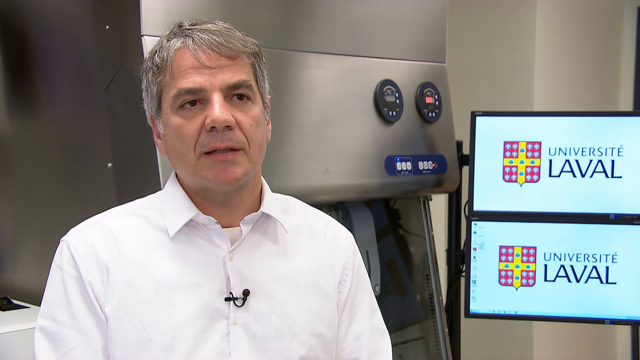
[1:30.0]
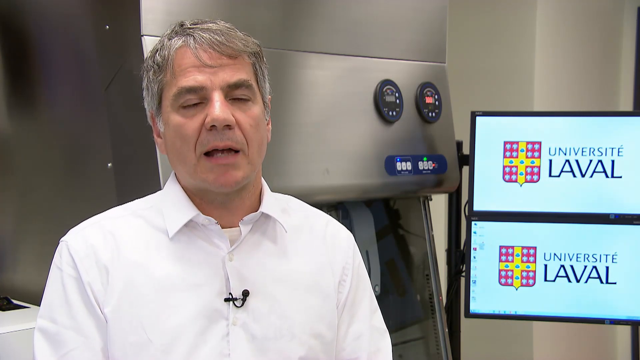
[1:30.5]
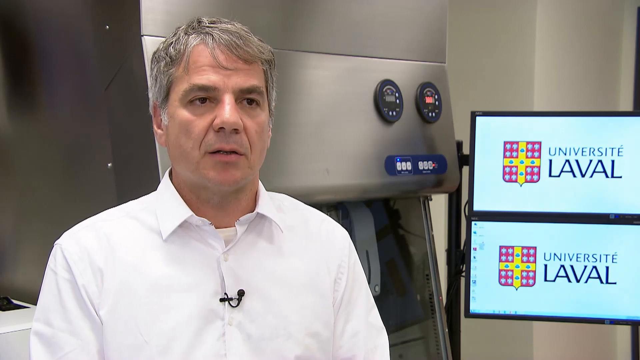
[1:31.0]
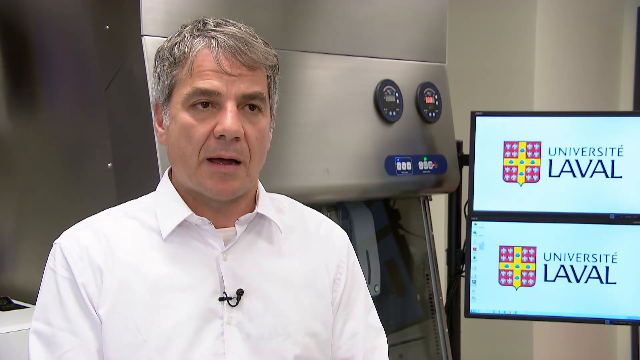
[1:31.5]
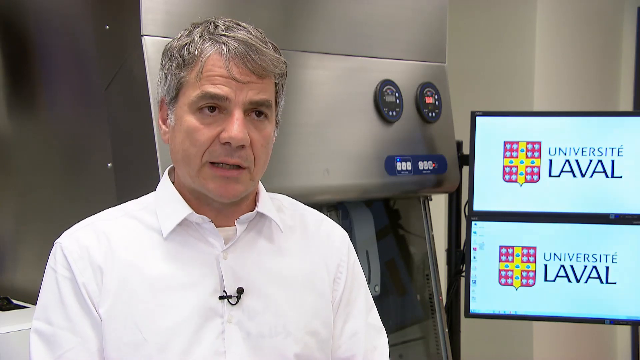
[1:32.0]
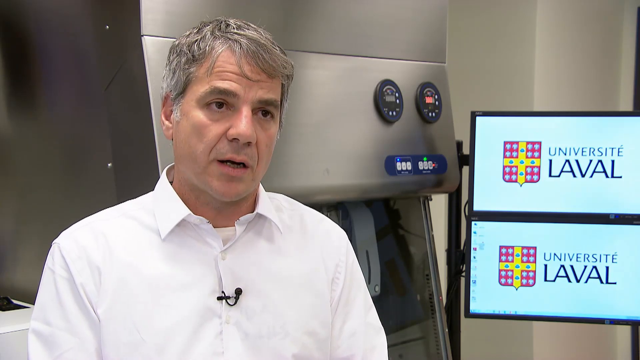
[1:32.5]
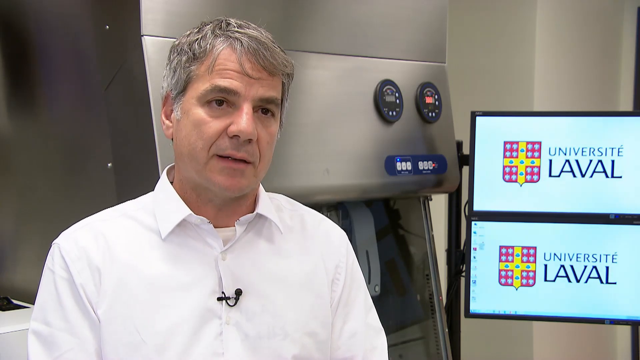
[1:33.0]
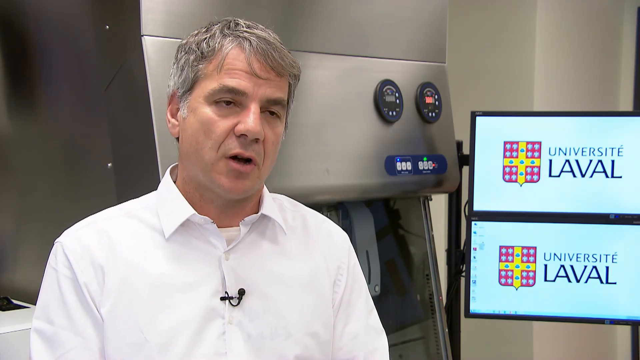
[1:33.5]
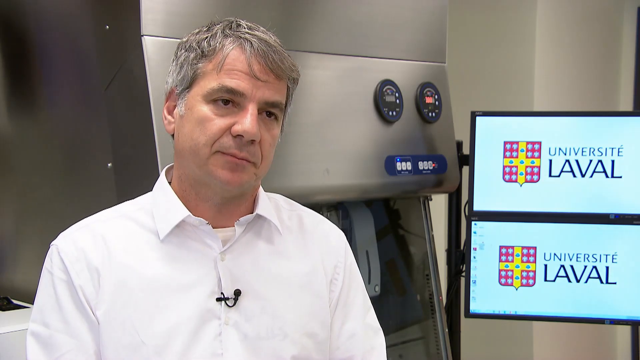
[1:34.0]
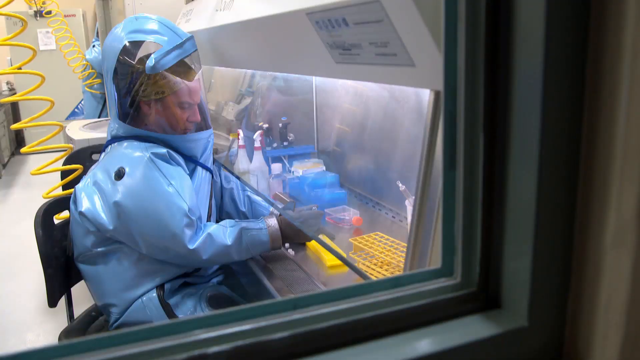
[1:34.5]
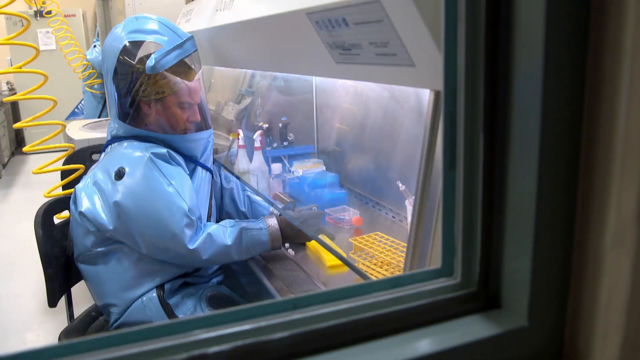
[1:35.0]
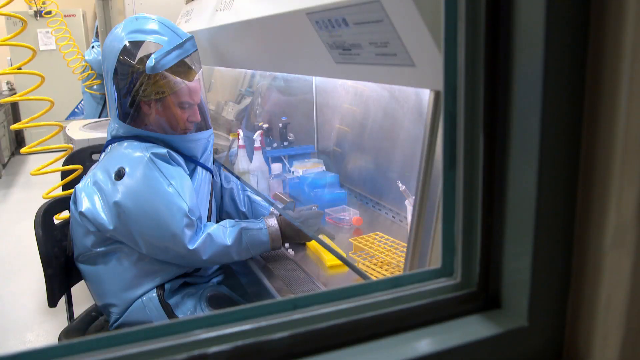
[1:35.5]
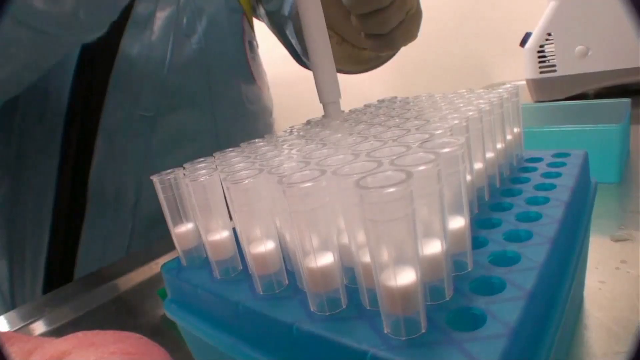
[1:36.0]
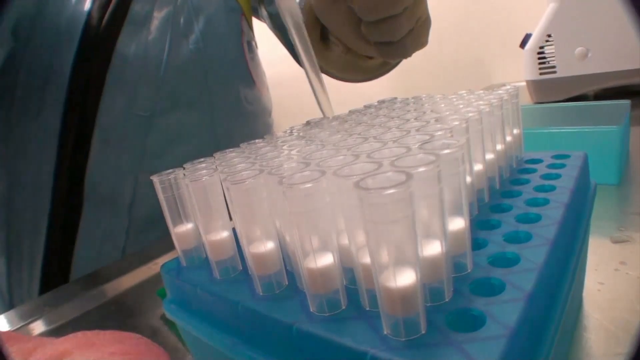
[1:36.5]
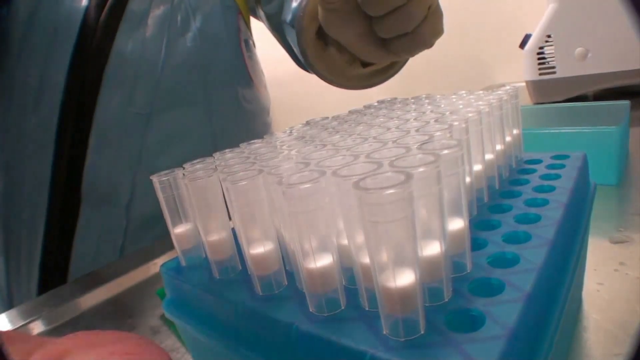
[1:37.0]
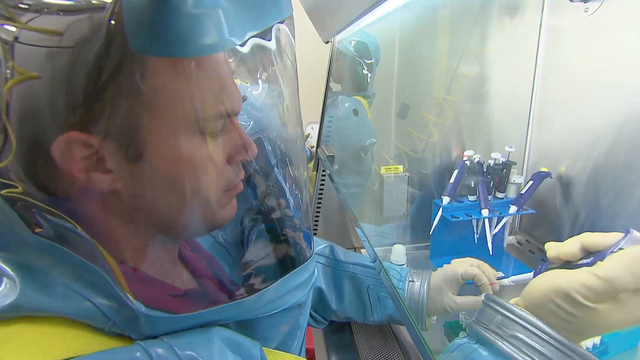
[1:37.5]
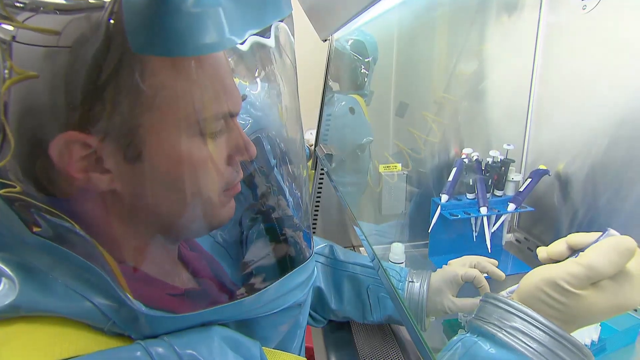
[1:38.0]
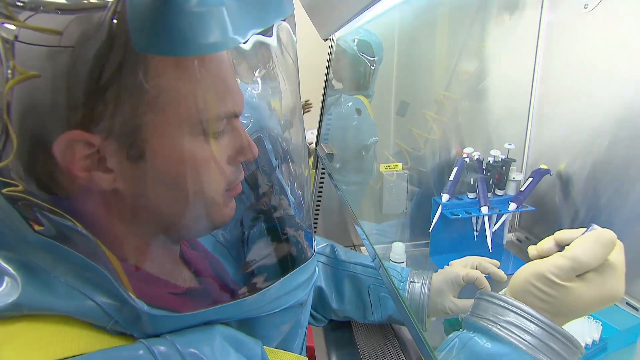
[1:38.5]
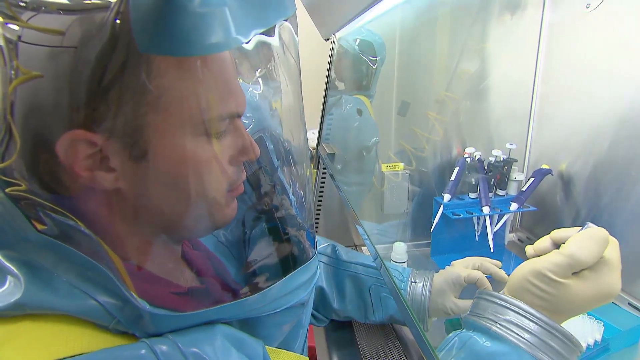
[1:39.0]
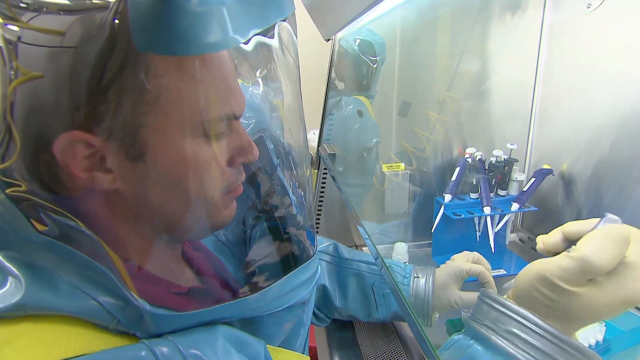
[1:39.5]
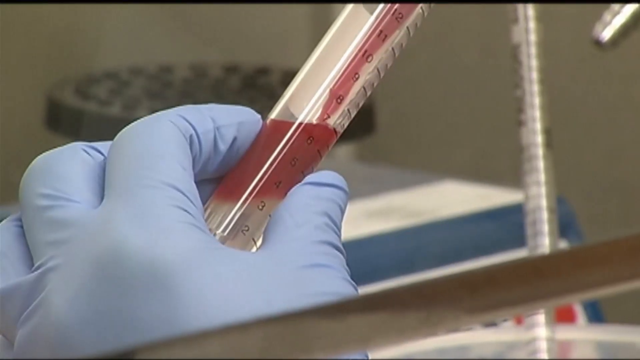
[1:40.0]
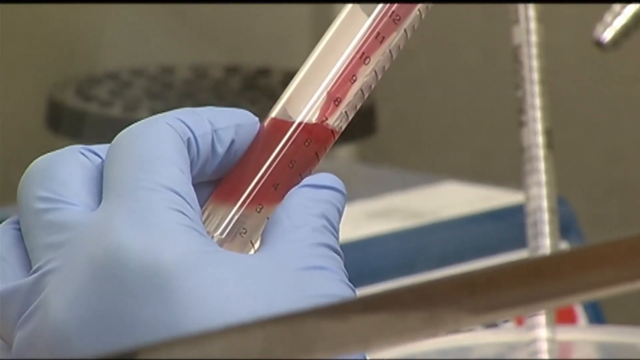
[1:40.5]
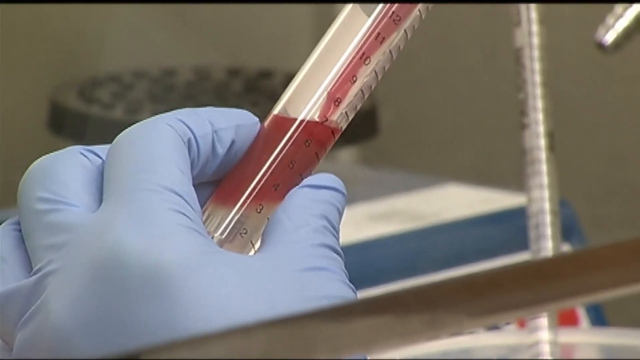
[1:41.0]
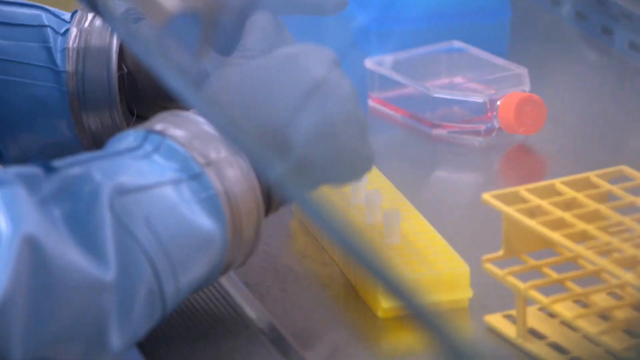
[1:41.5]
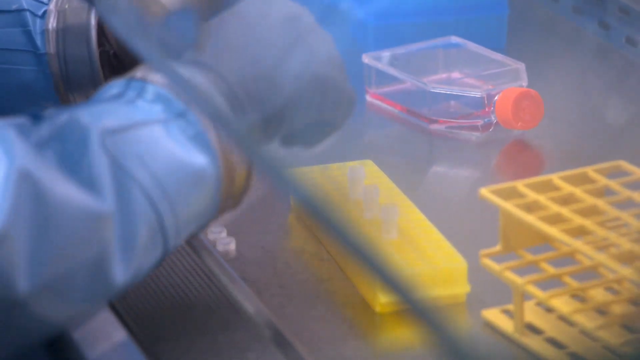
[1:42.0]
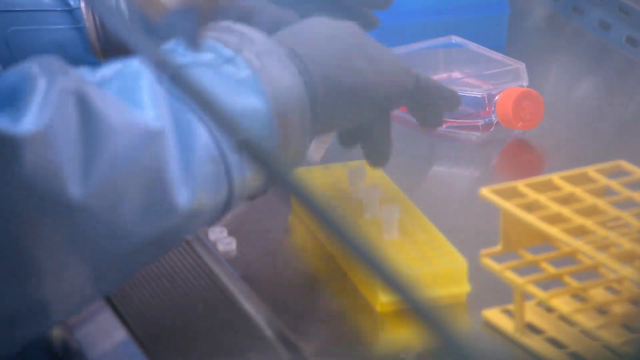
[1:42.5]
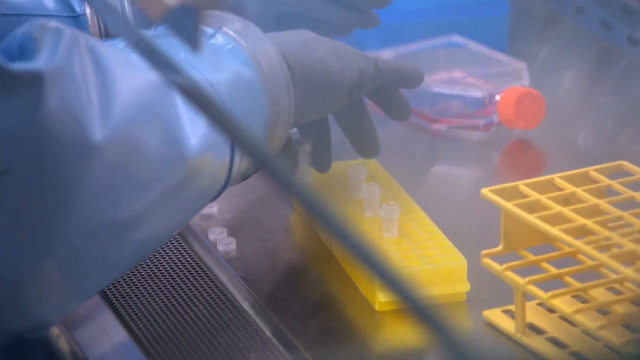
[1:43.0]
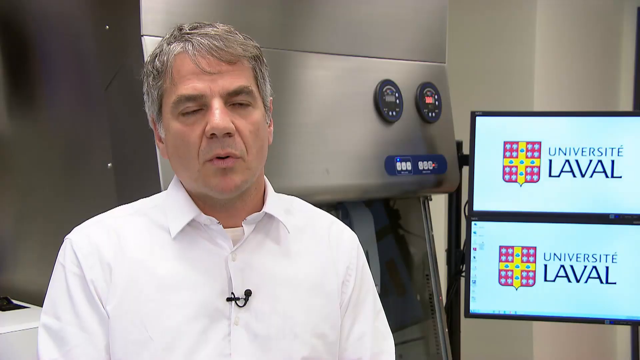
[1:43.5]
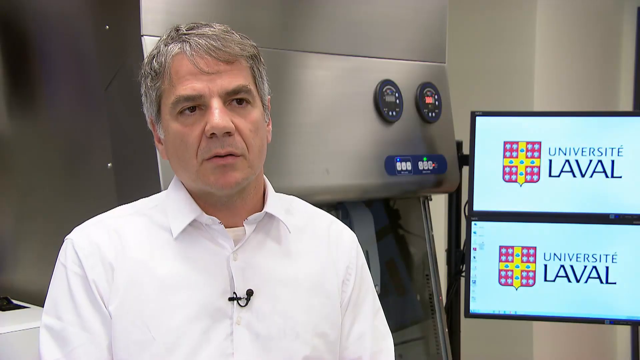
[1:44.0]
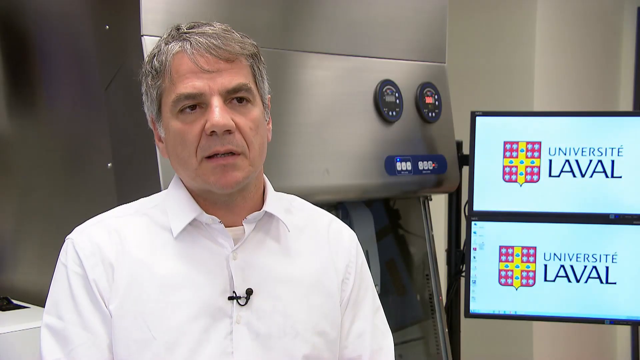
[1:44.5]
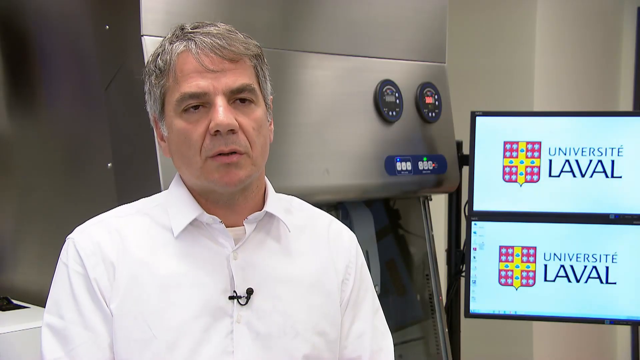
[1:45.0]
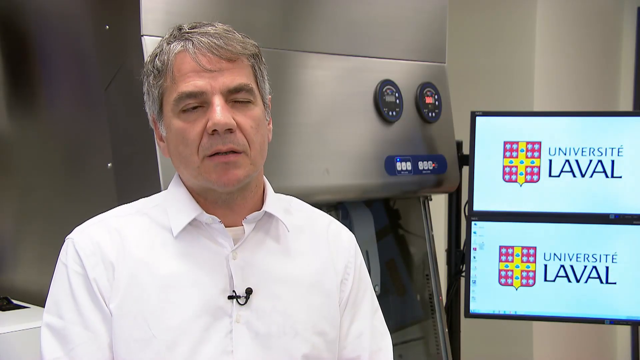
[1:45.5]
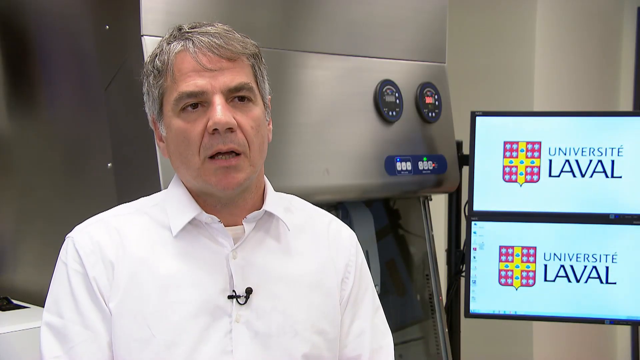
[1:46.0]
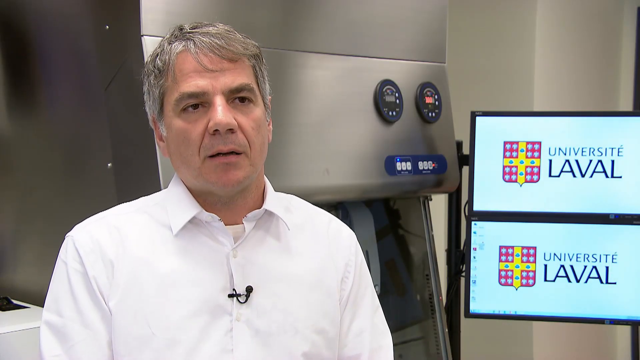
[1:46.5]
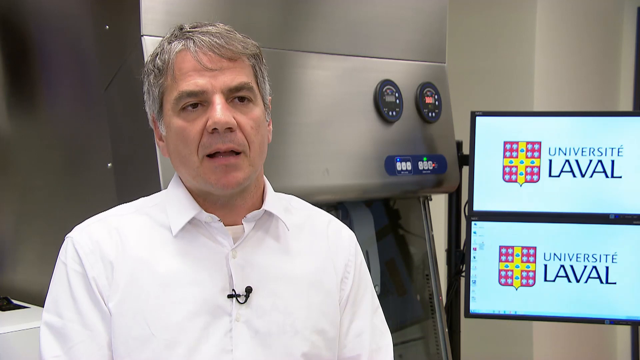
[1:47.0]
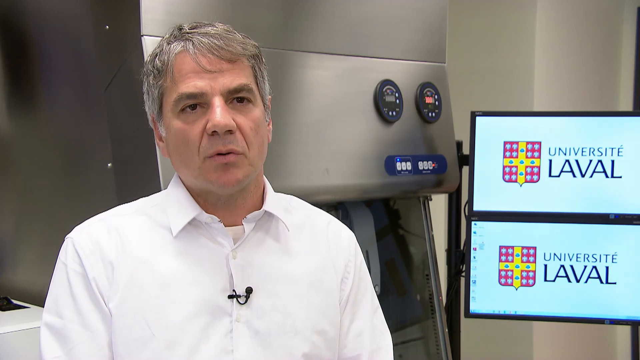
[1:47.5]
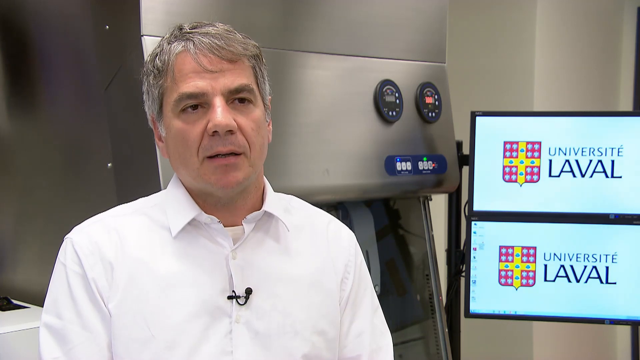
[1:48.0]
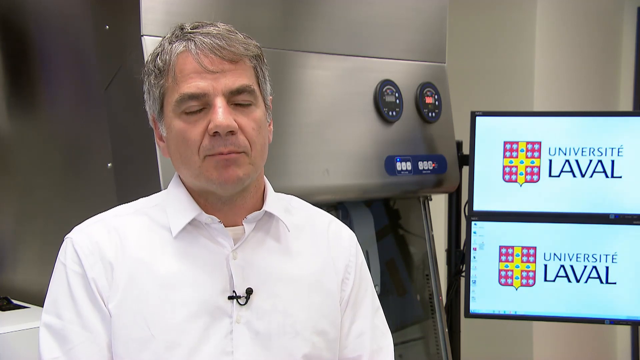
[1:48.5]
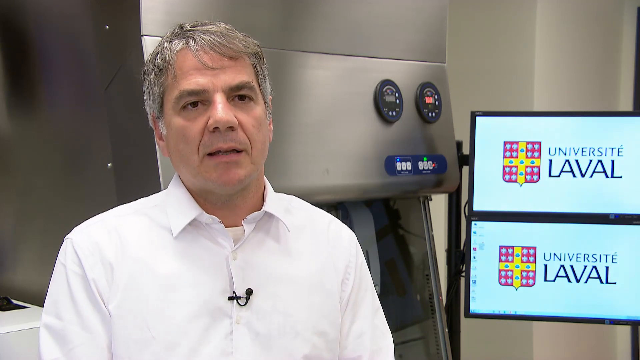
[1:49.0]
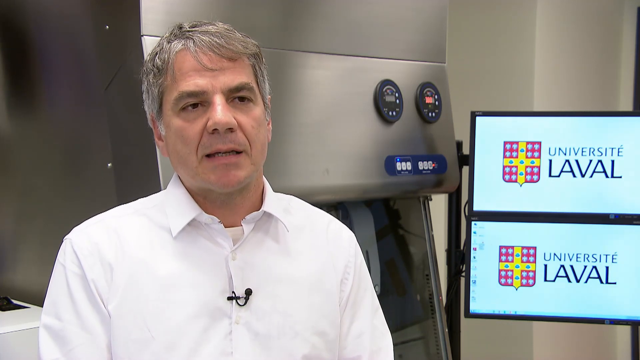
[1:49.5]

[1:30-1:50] A man in a white collared shirt with a small black microphone clipped to it talks to the camera. A large metal piece of equipment is behind him, and screens to his side say "University of LaValle." The video switches to what look to be people in hazmat uniforms working on something in a lab, where vials have some sort of liquid put into them. It then shifts back to the man in the white collared shirt as he continues talking to the camera. Lights blink on the large metal machine directly behind him.